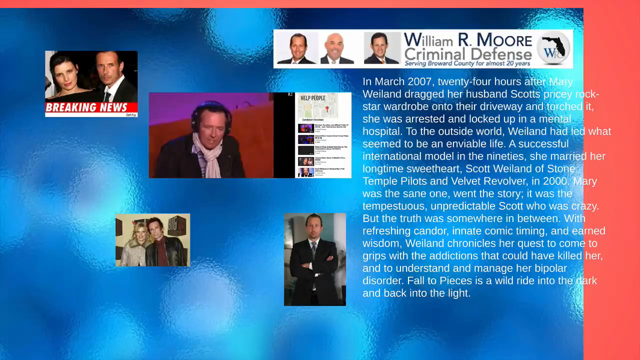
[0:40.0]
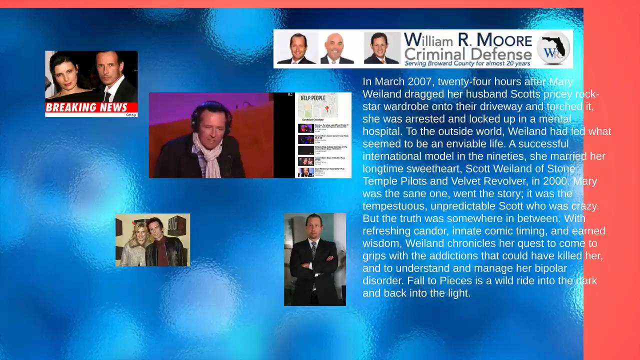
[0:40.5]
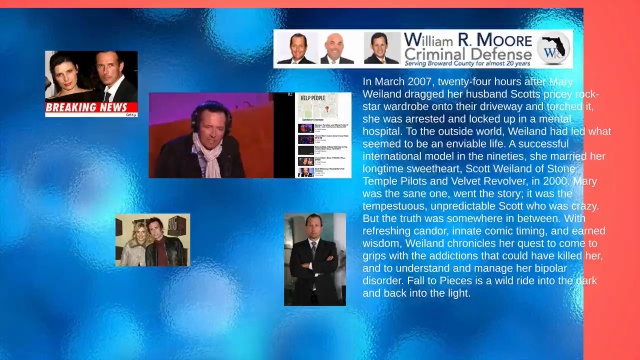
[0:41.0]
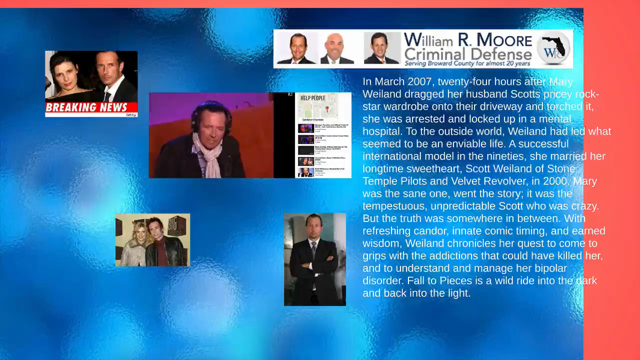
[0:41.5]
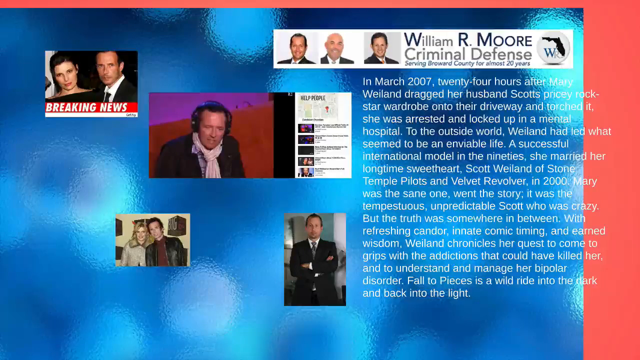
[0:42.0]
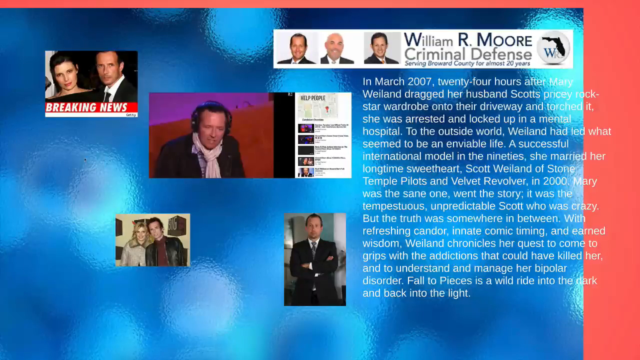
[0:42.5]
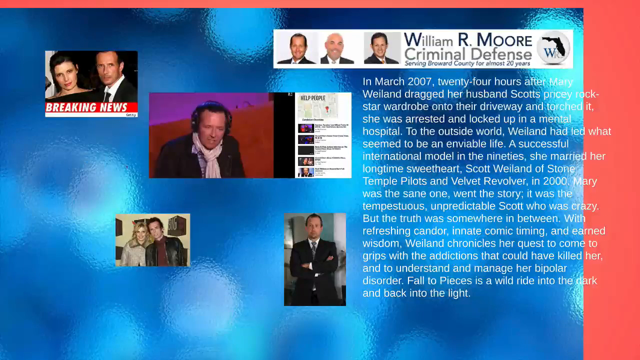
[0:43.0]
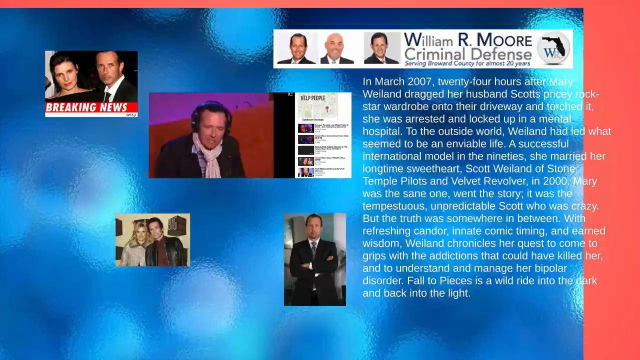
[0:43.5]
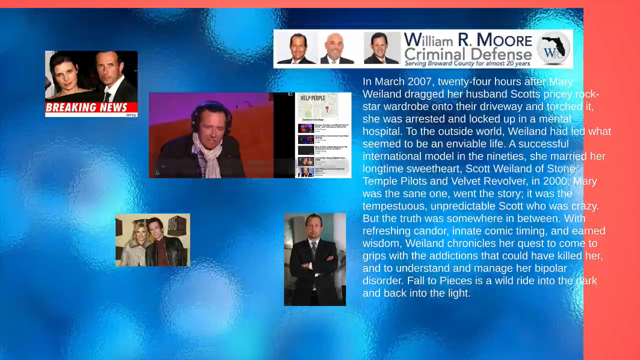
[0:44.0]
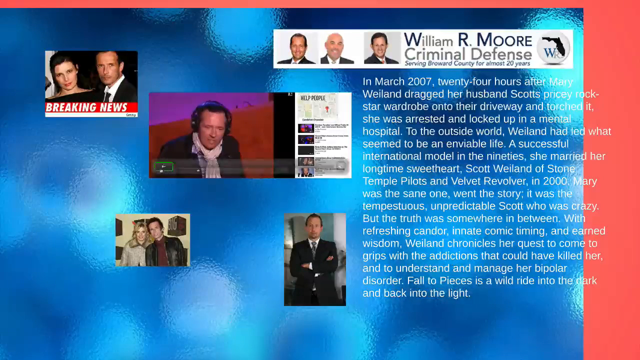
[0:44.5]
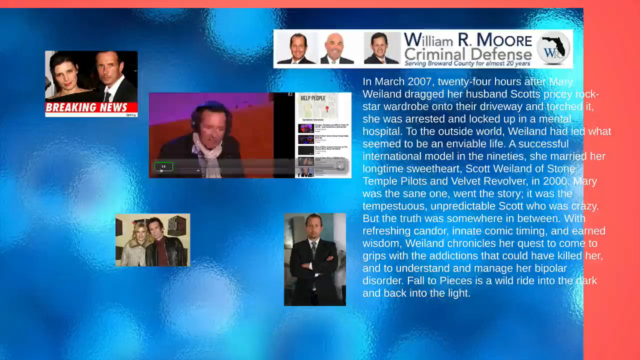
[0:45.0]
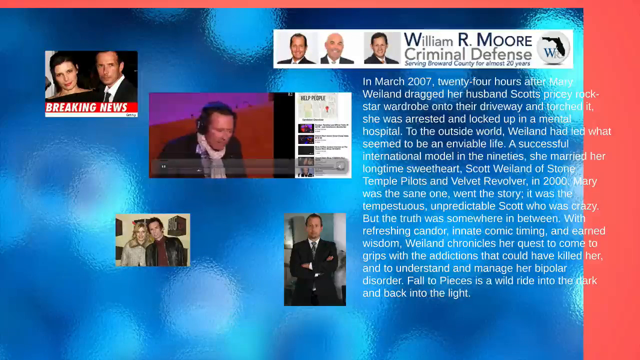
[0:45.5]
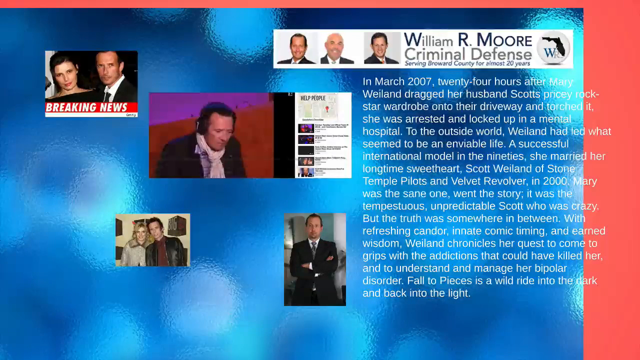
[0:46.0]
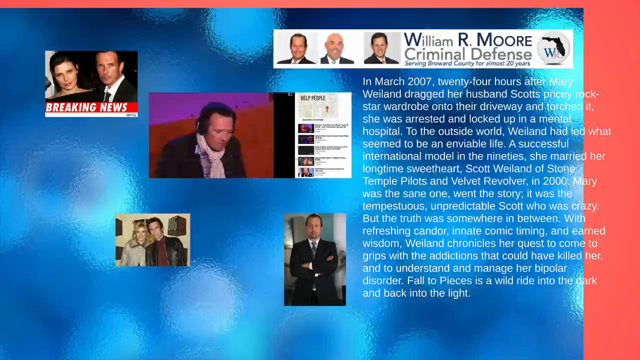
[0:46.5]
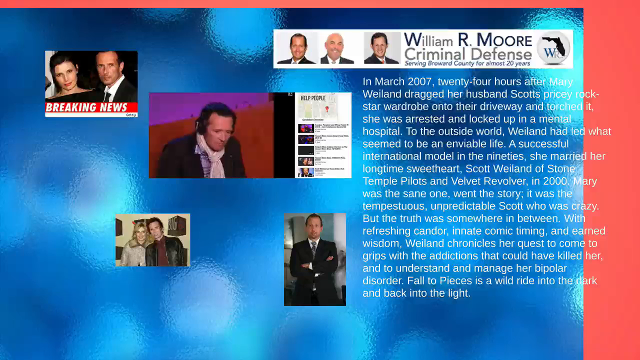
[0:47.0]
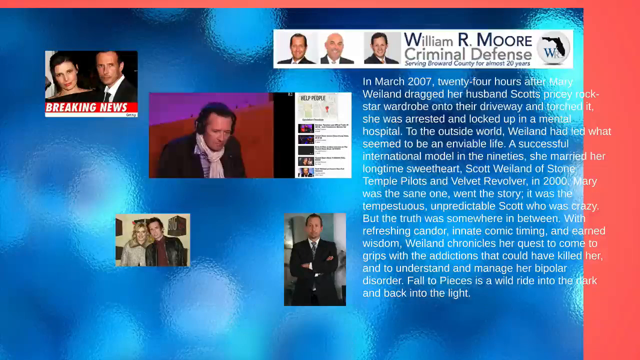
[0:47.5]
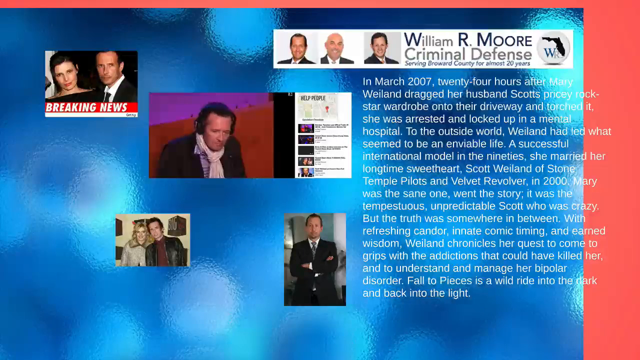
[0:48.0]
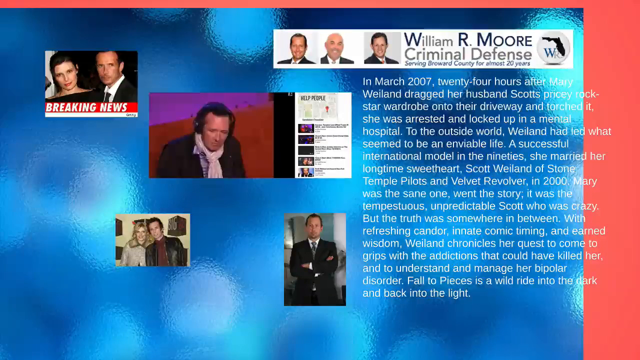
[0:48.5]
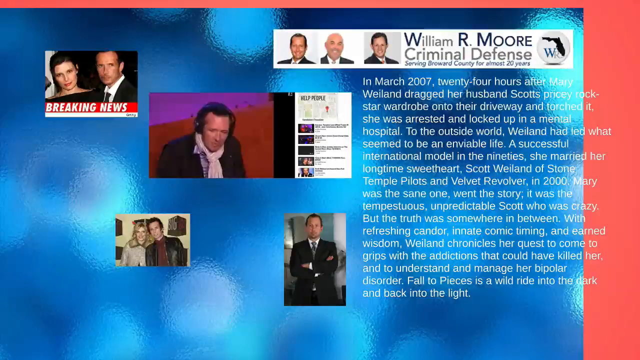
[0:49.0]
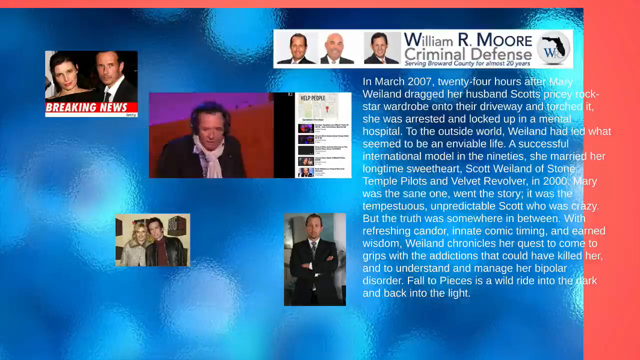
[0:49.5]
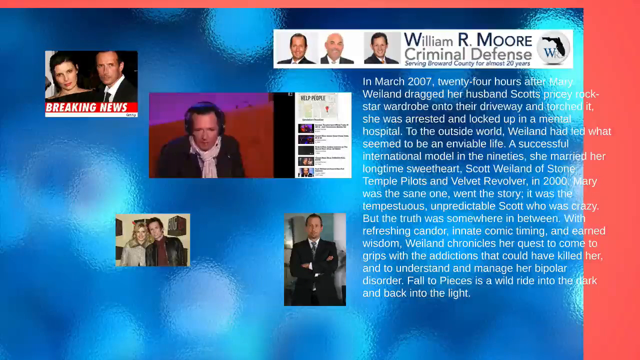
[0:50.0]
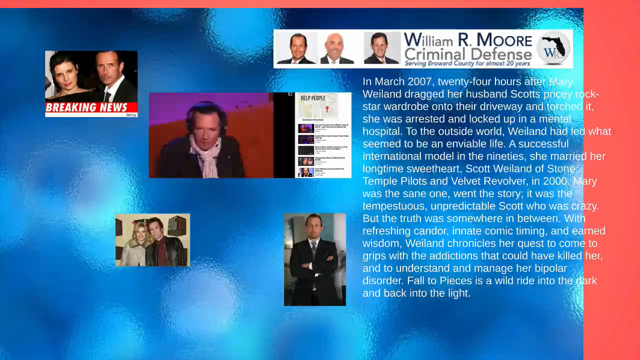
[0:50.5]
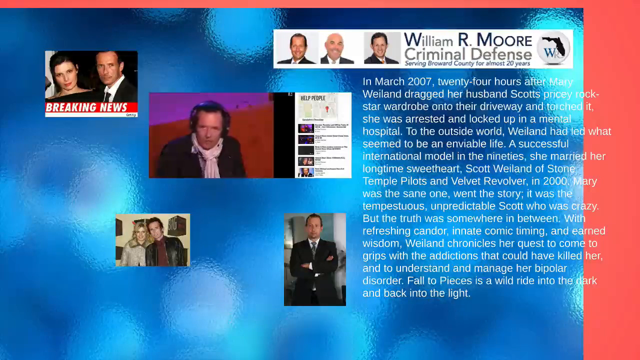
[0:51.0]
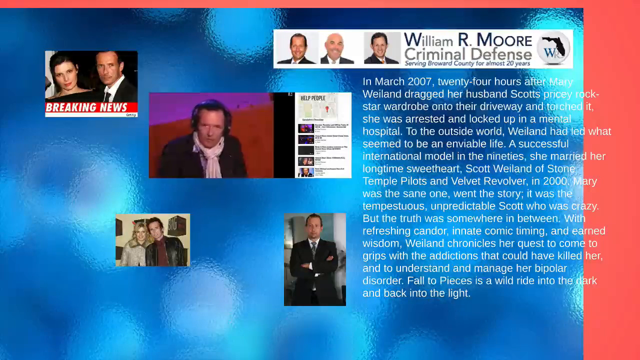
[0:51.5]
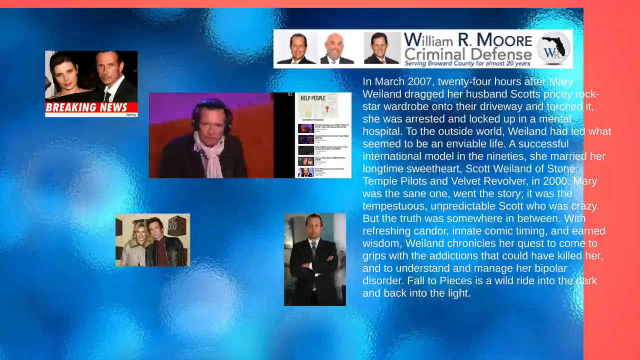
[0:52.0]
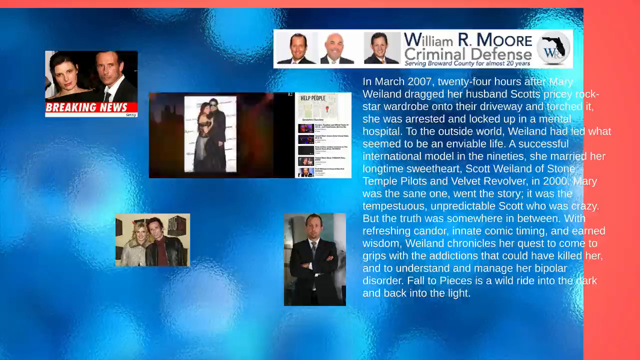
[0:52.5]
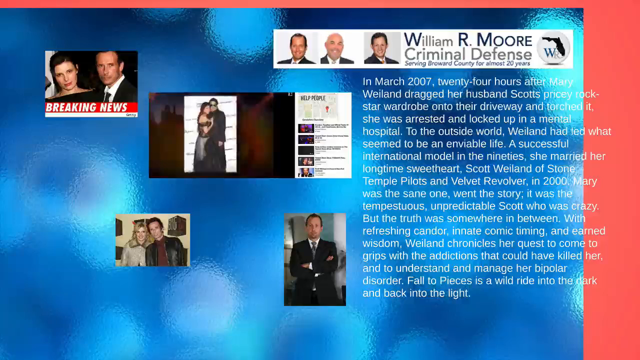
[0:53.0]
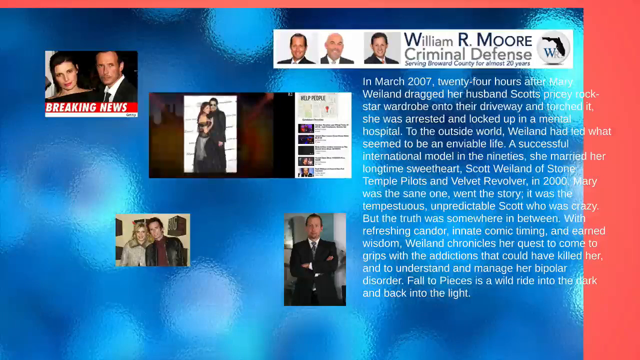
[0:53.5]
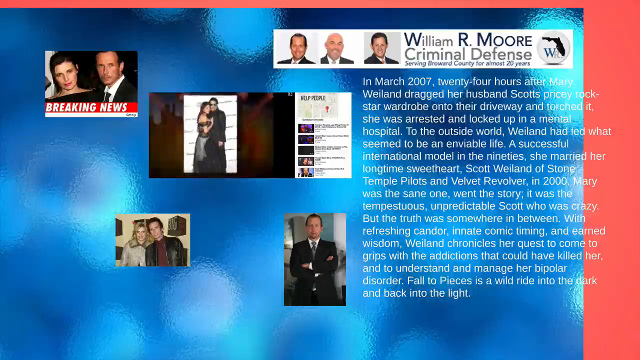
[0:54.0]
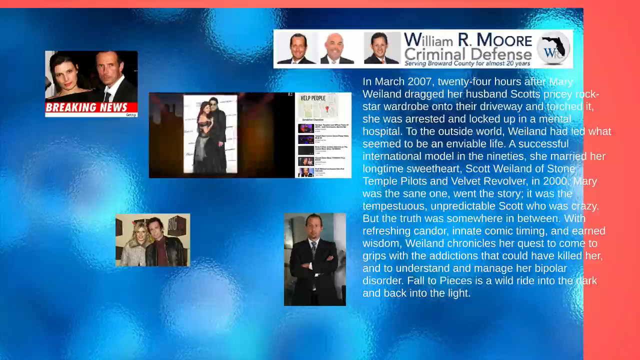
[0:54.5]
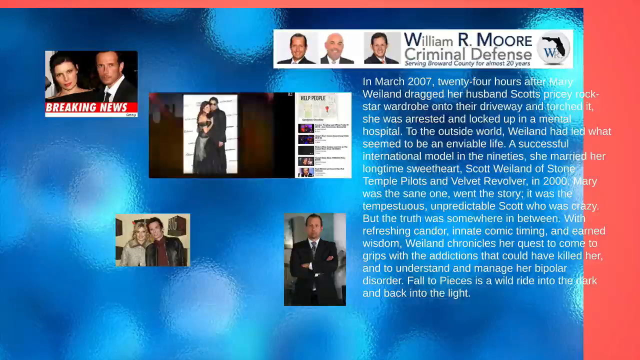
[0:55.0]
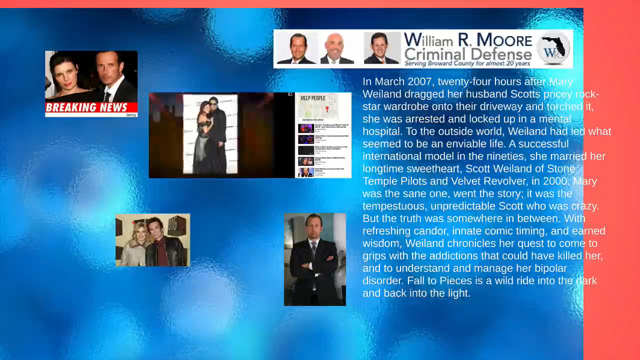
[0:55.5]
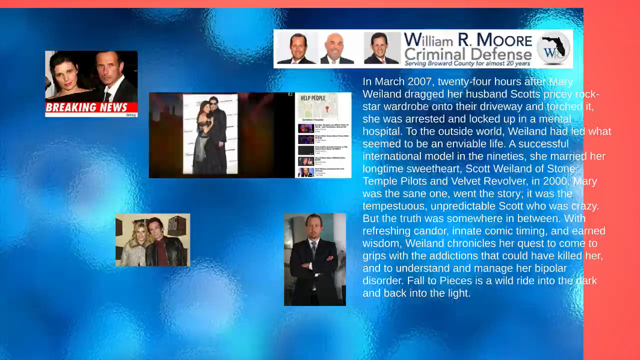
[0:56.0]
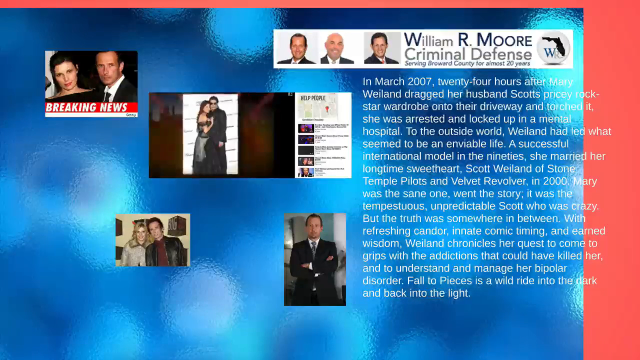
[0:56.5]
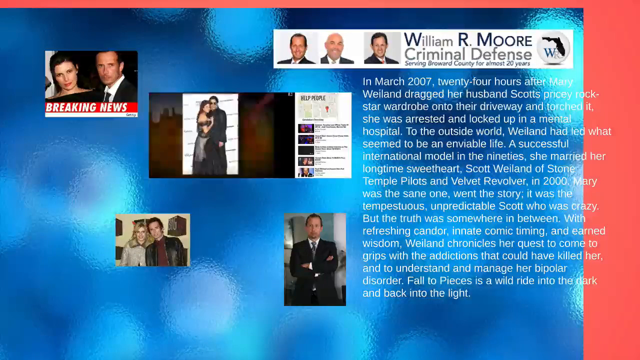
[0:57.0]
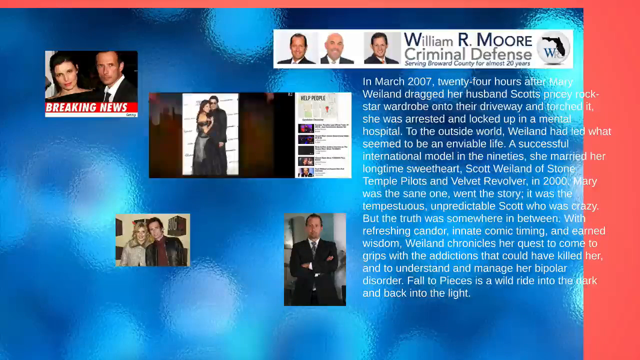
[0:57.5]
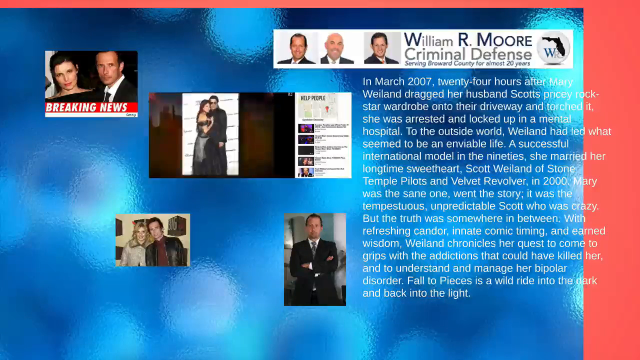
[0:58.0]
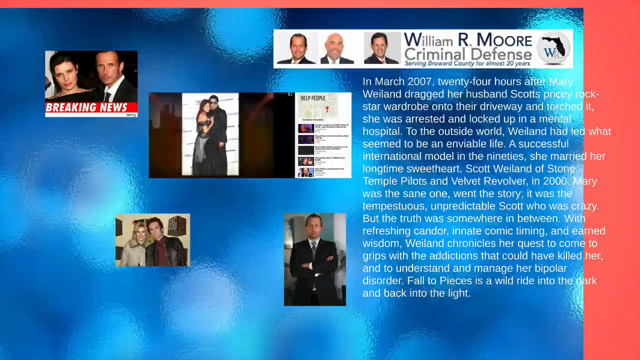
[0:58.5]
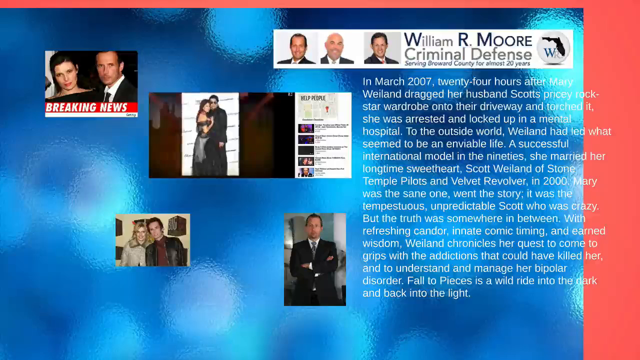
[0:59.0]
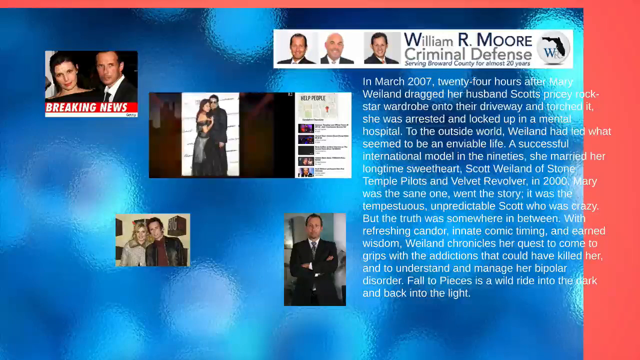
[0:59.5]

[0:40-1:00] The same screen and writing remain as the same man continues to talk. The couple is then shown together at what looks like an award ceremony. The article continues on the plain blue wallpaper. At the top is William Almore, a criminal defense lawyer, with text mentioning almost 20 years. On the other side it says "breaking news." Three people are shown at the top, all criminal defense lawyers. A gun and "WHO" are in the corner. A small video among the pictures plays as the remarks are made.